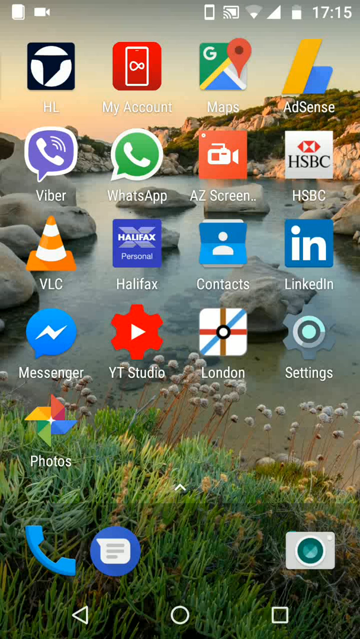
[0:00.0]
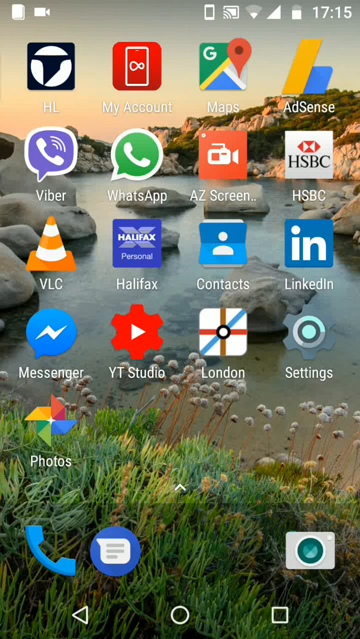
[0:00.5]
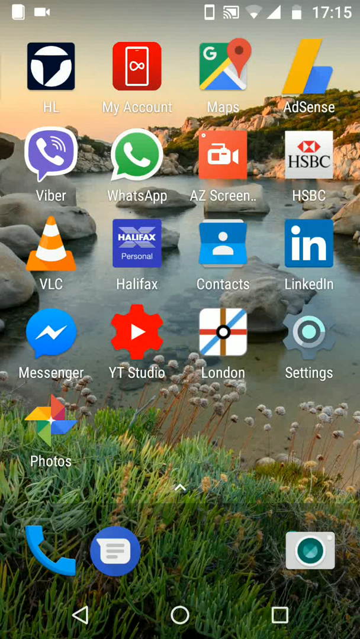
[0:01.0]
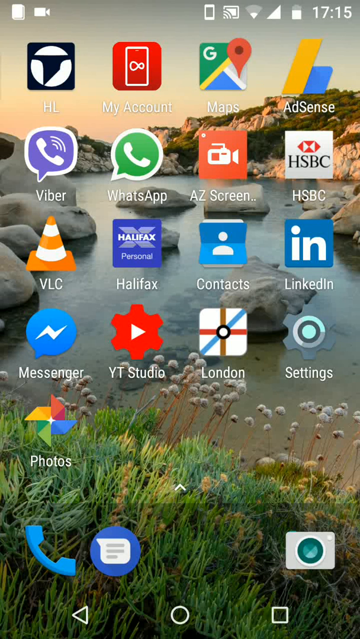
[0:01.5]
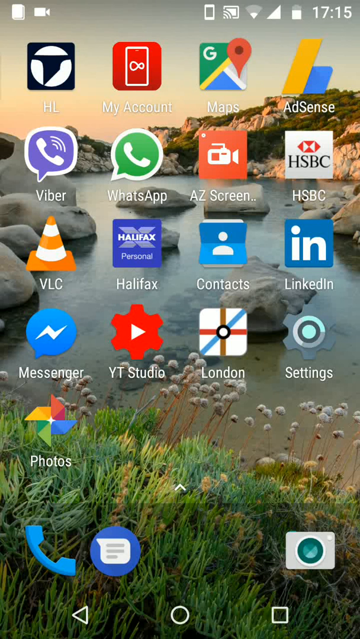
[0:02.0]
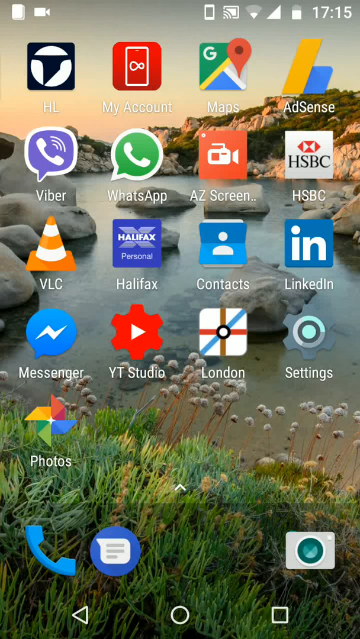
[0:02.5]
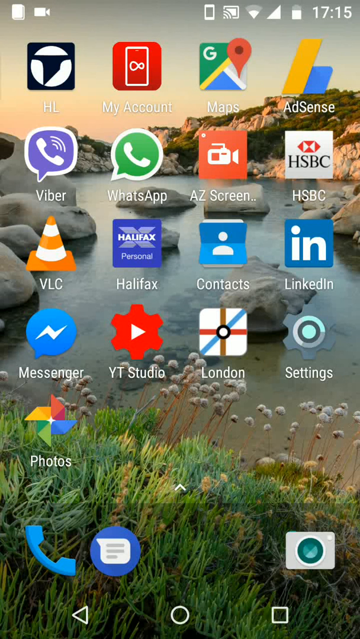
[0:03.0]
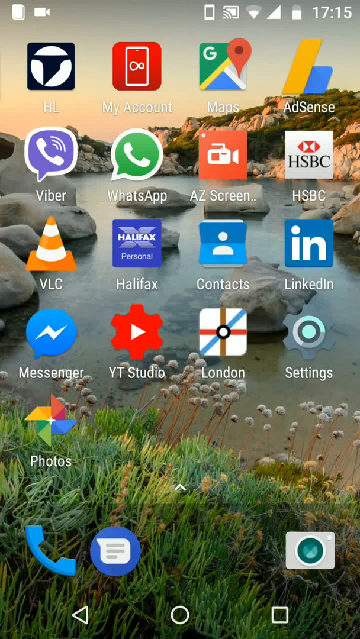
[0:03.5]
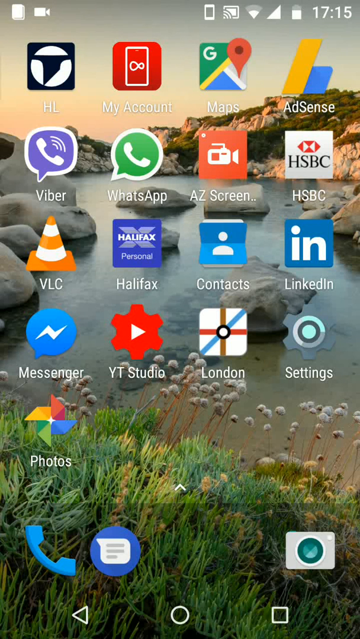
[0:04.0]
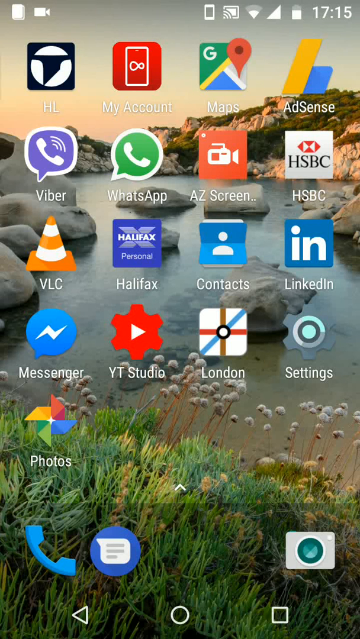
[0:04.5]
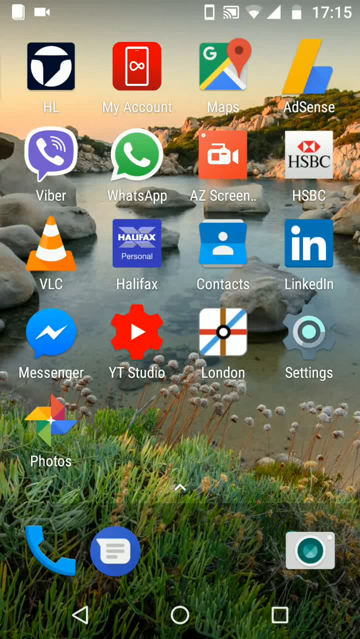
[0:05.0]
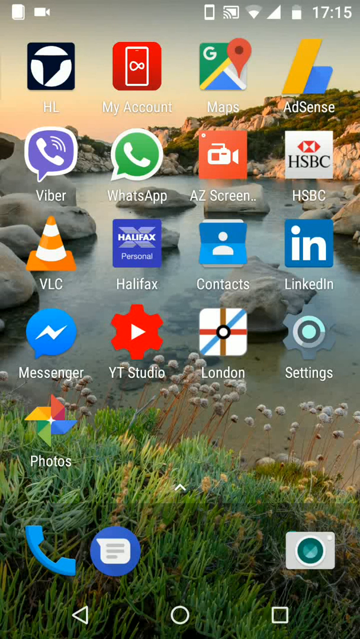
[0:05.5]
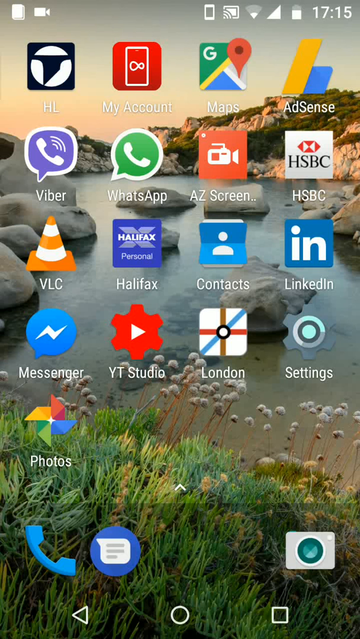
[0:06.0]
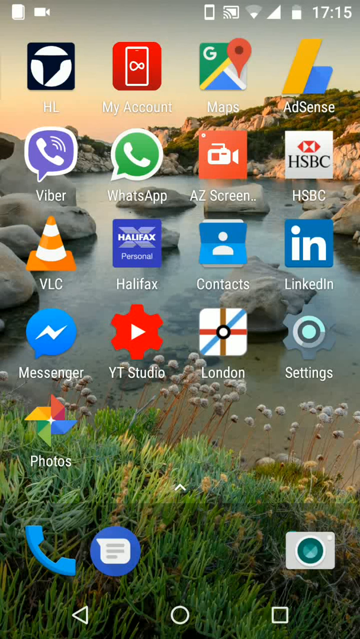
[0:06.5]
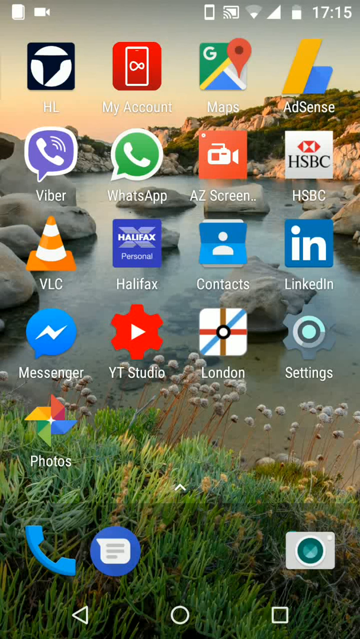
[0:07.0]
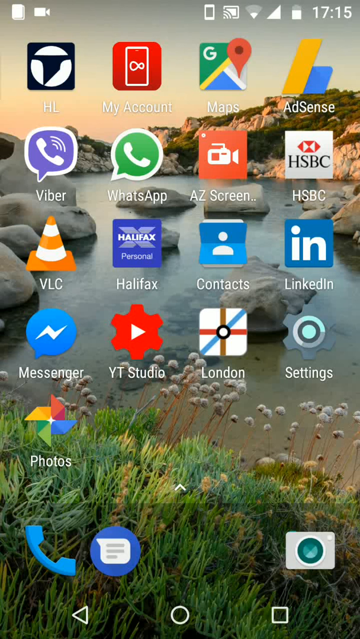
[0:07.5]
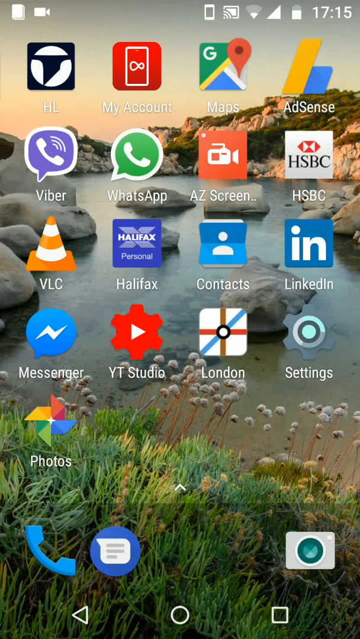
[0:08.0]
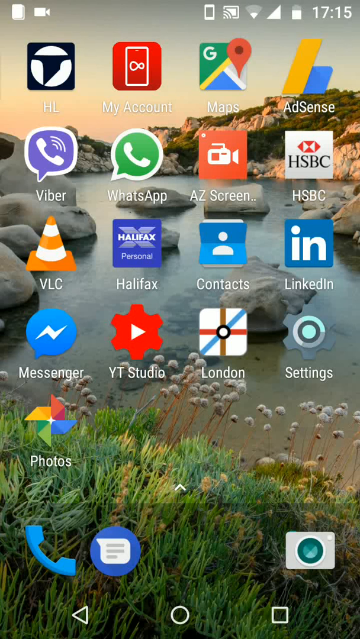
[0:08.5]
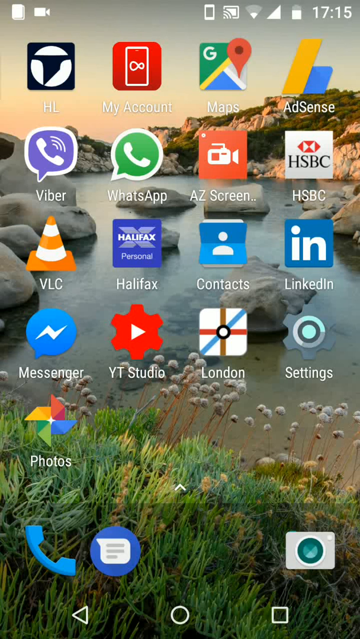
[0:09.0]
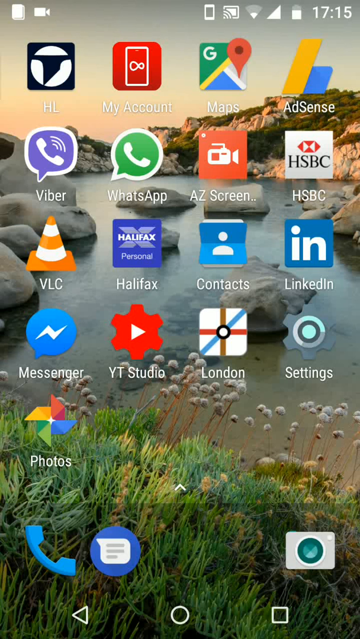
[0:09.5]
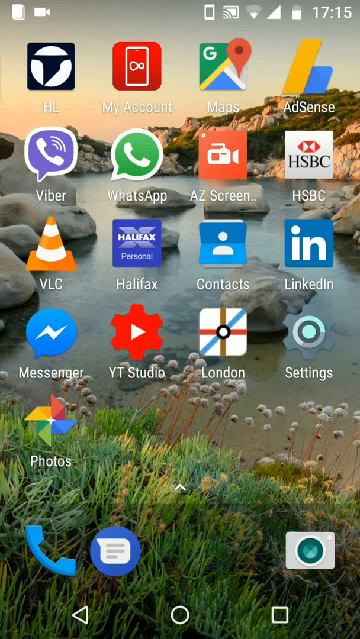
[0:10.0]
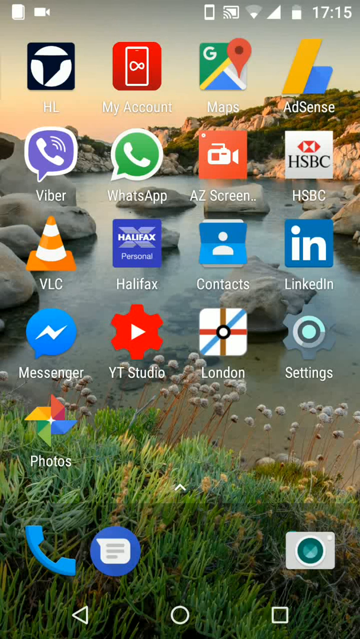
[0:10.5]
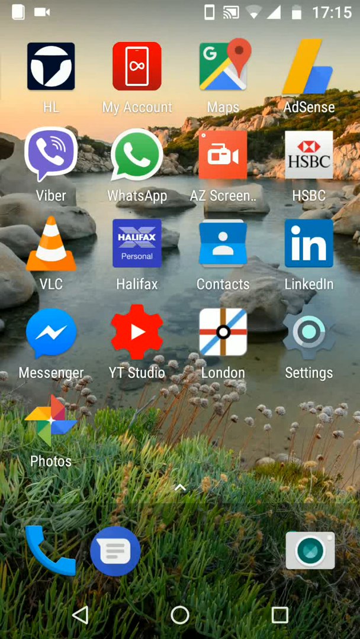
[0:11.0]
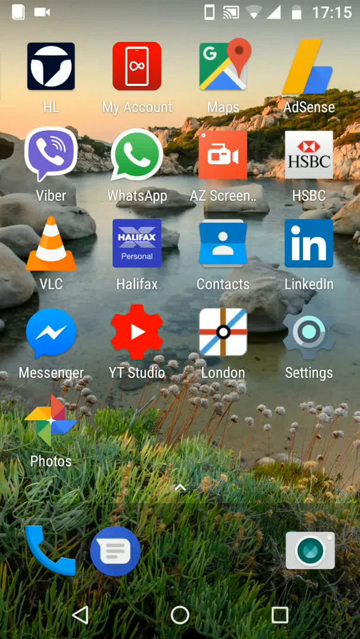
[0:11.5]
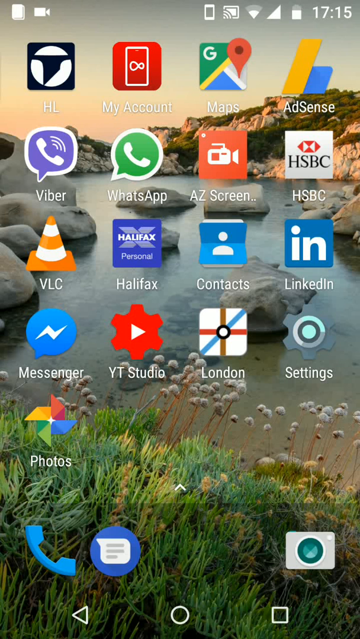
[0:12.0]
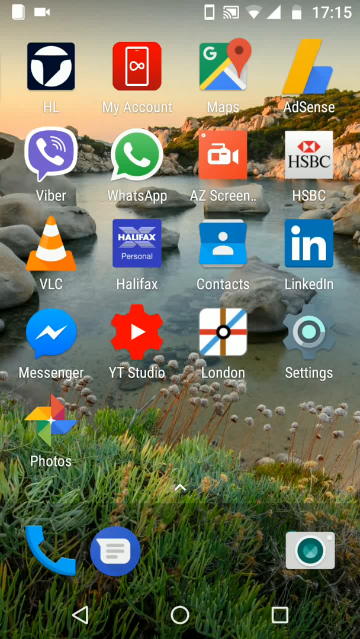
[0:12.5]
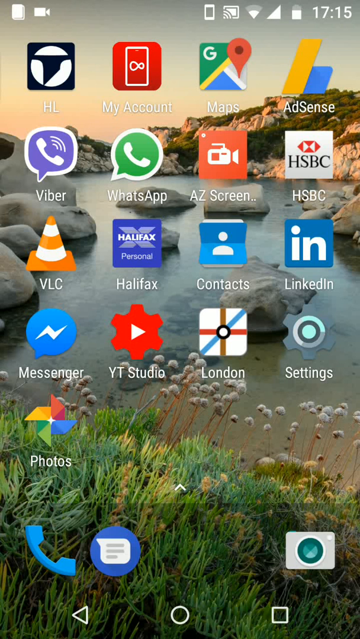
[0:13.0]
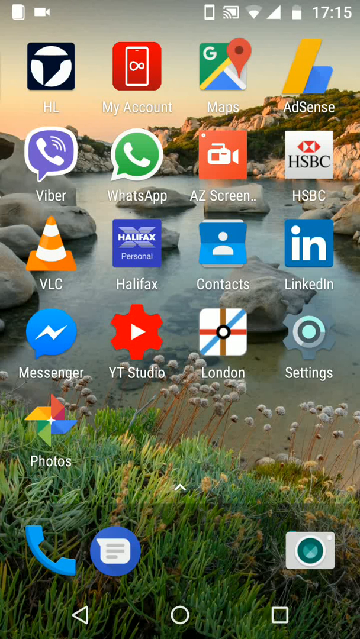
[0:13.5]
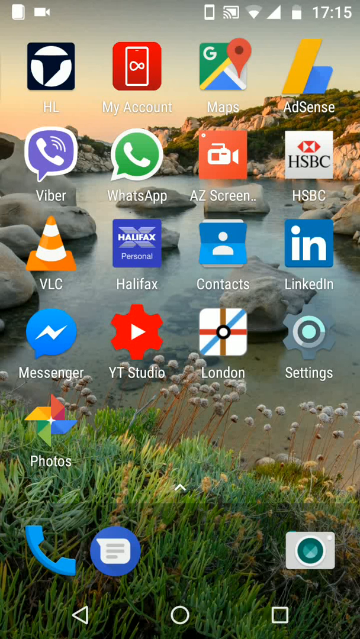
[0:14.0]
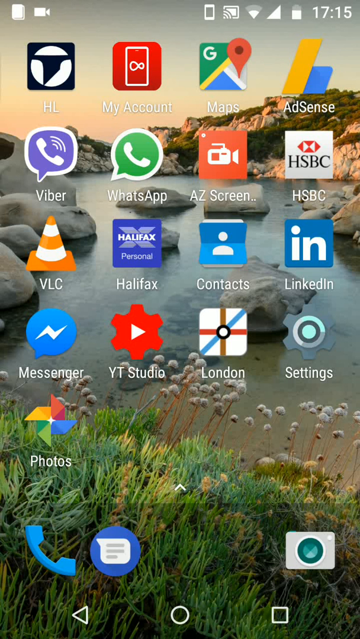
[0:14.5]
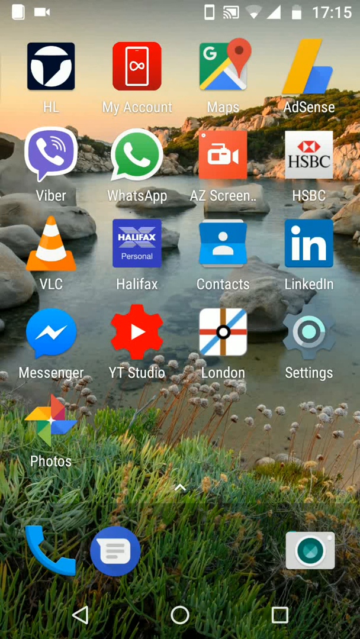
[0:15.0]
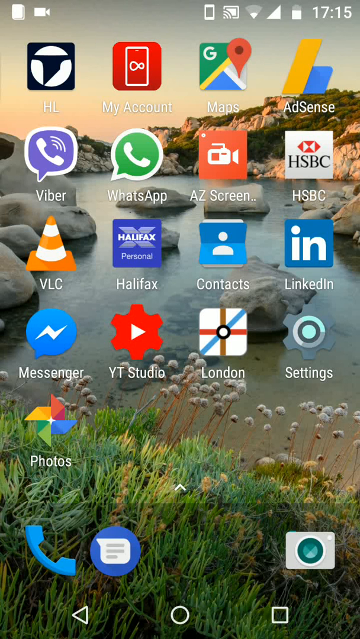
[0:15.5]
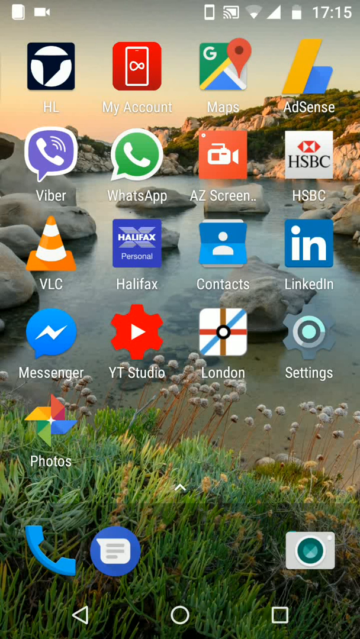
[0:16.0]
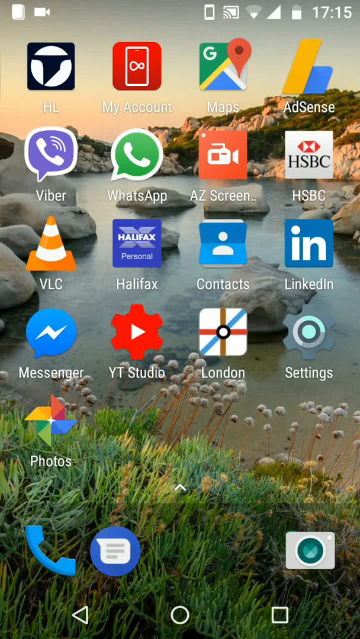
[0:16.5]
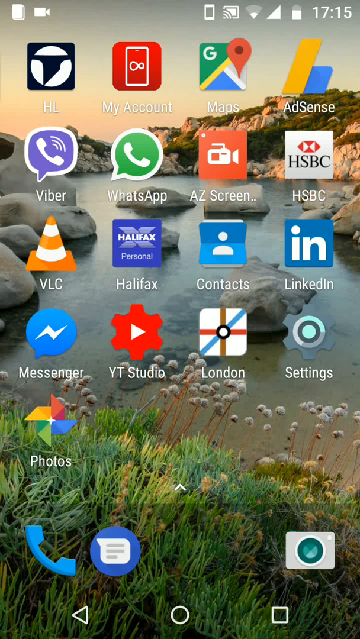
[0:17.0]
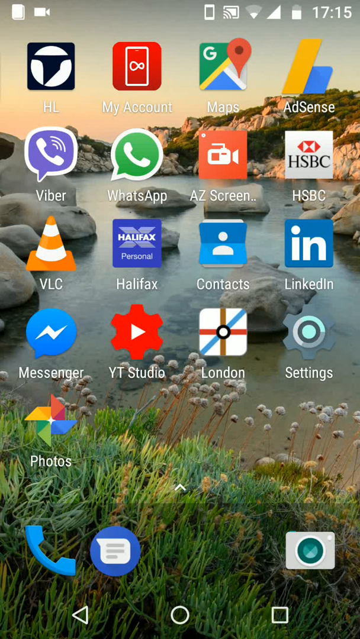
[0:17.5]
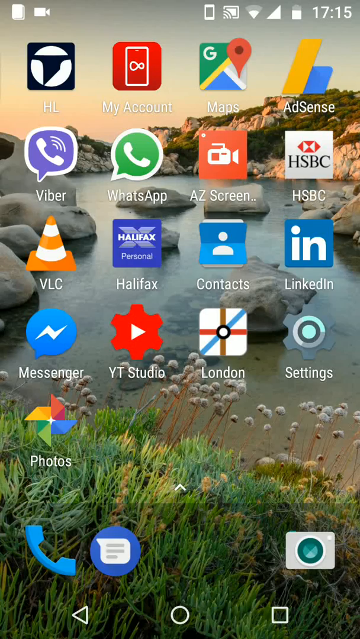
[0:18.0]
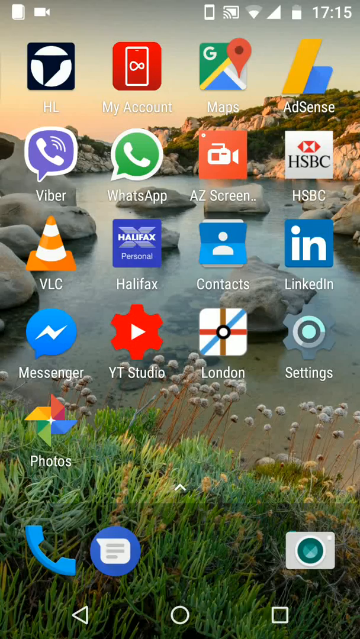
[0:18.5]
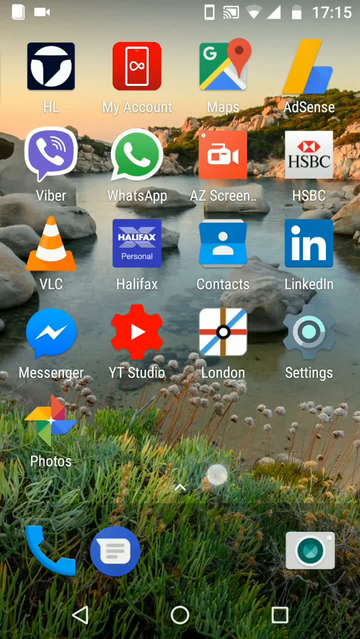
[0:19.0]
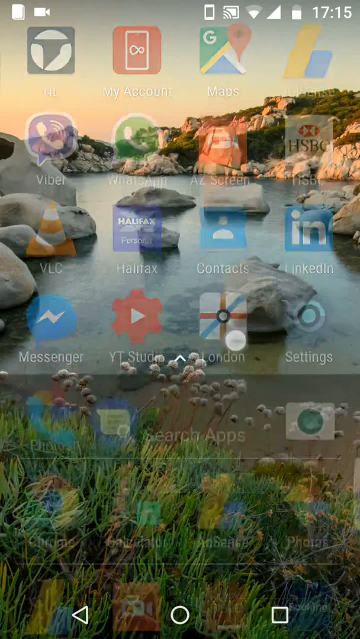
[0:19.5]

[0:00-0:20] The screen of what is probably an Android phone shows several icons on the home screen, organized randomly. Among them are Google Maps, AdSense, Viber, WhatsApp, Waze Screen, HSBC, VLC, Halifax, Contacts, LinkedIn, Facebook Messenger, YouTube Studio, another London icon, Settings and Google Photos. Along the bottom are icons for calling, messaging and photos.